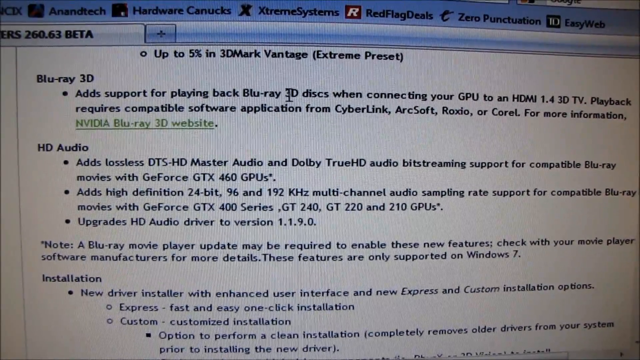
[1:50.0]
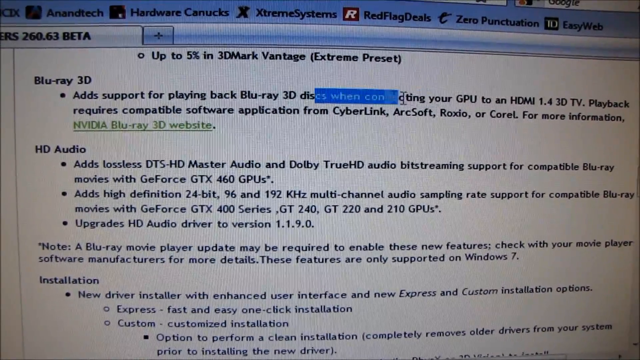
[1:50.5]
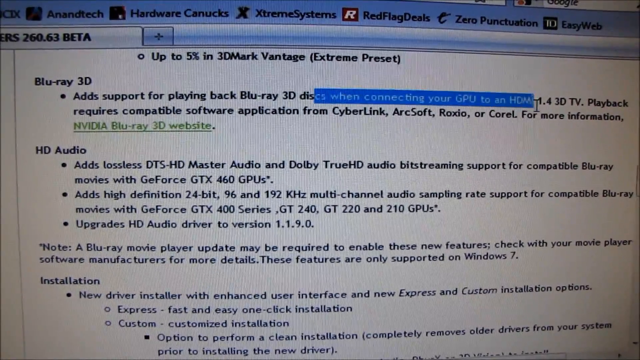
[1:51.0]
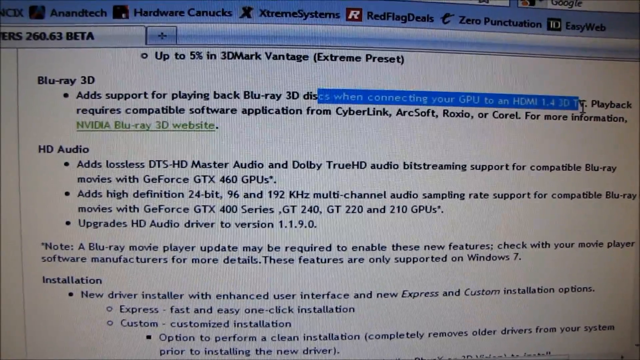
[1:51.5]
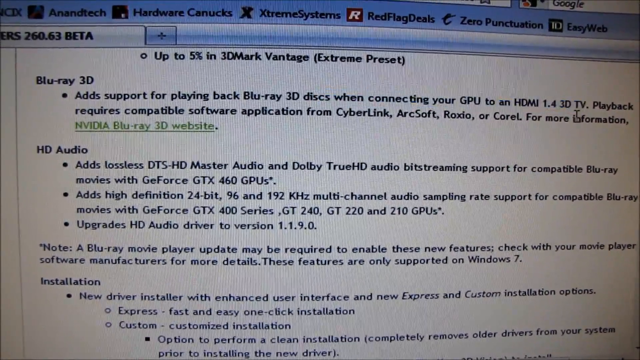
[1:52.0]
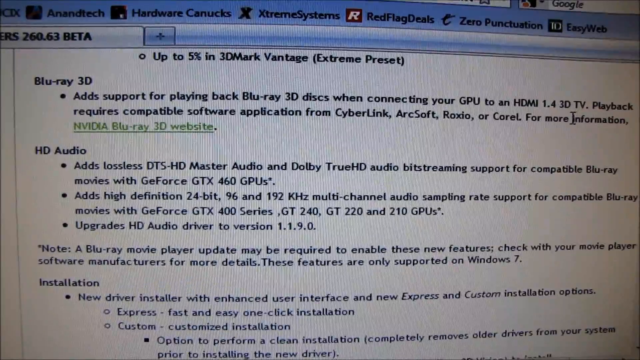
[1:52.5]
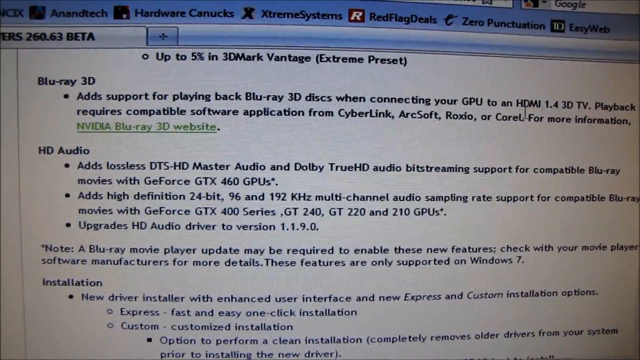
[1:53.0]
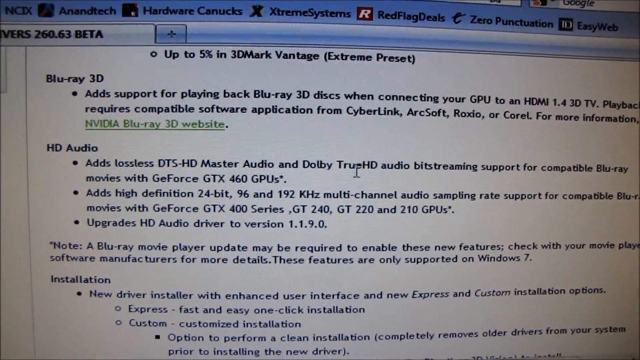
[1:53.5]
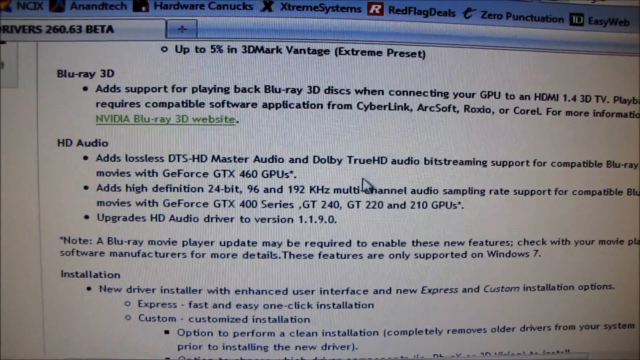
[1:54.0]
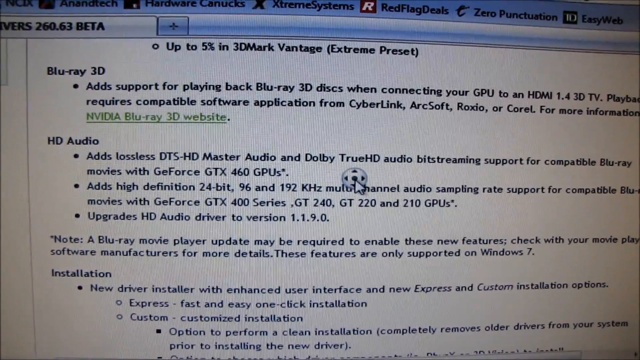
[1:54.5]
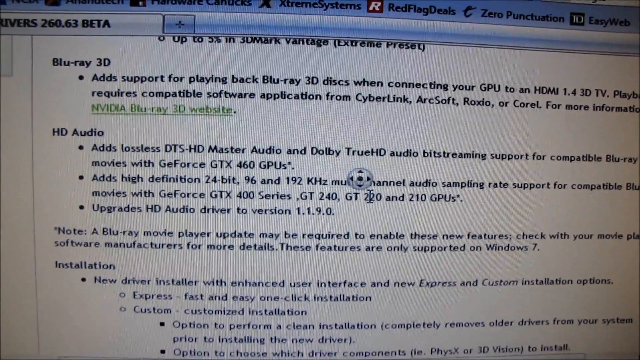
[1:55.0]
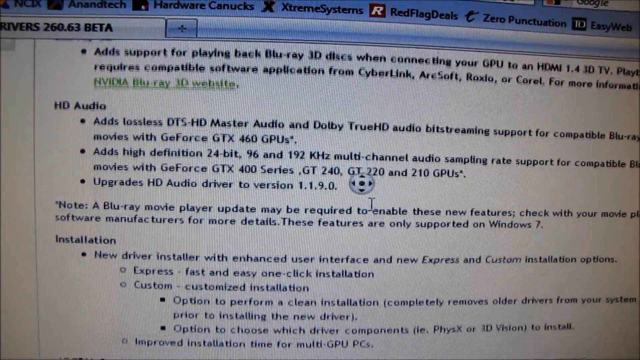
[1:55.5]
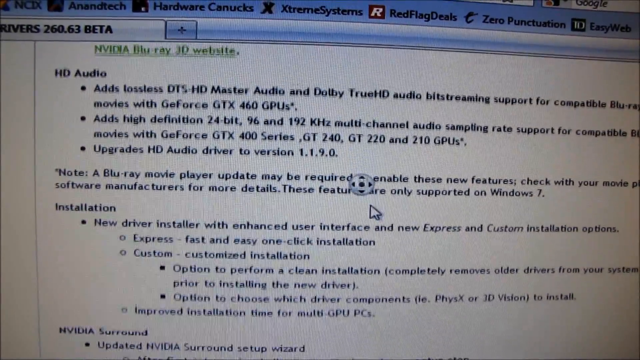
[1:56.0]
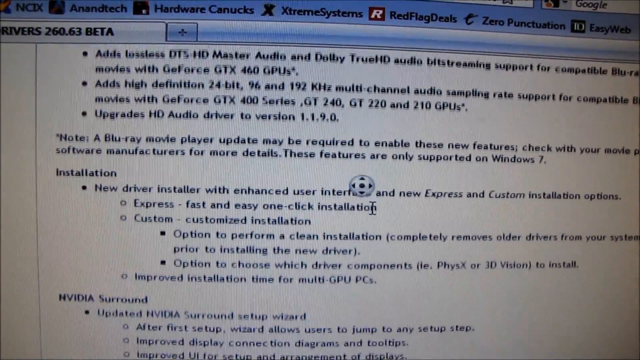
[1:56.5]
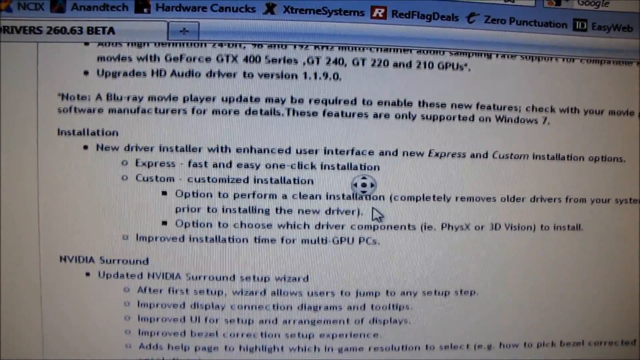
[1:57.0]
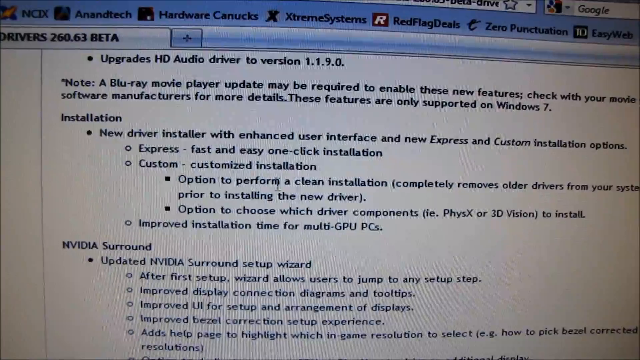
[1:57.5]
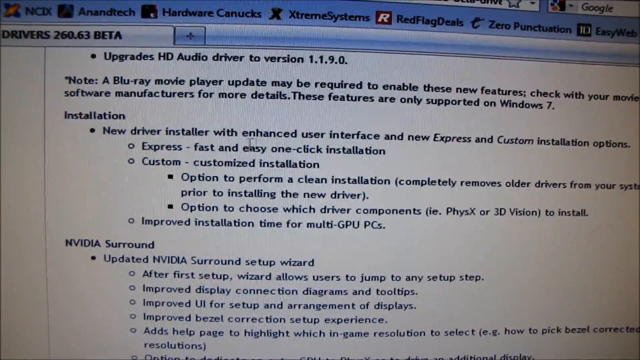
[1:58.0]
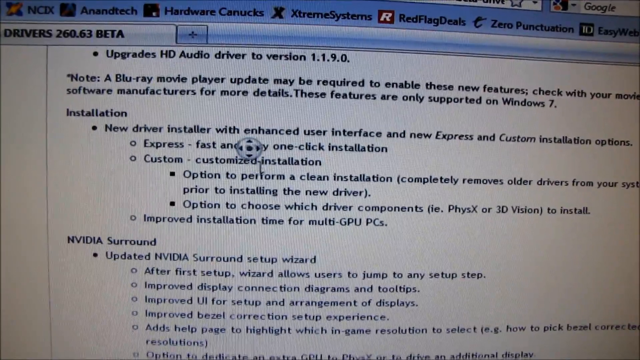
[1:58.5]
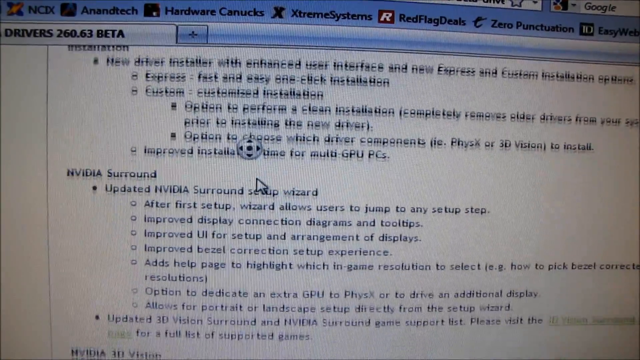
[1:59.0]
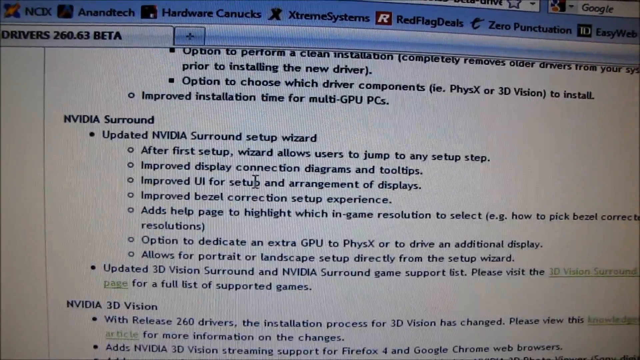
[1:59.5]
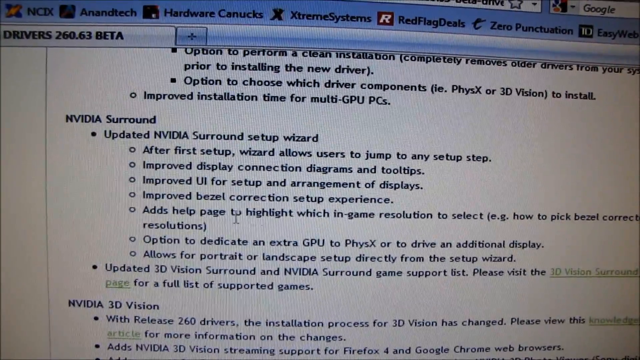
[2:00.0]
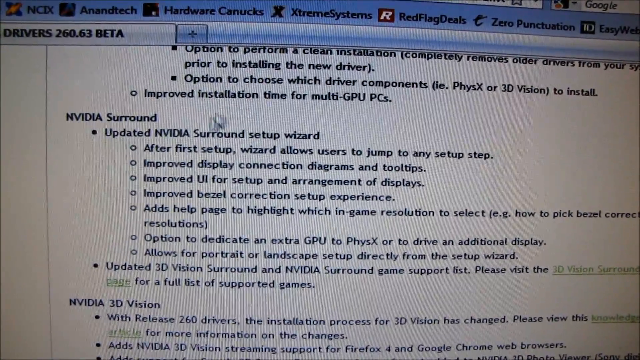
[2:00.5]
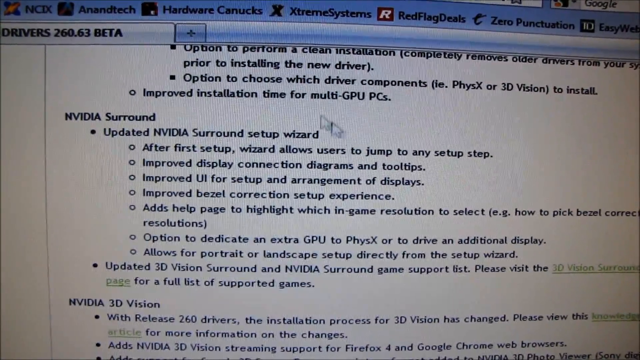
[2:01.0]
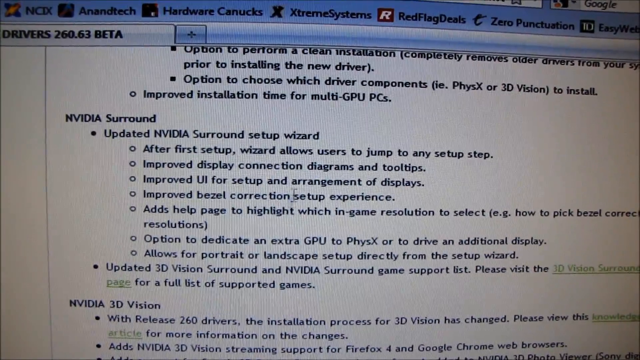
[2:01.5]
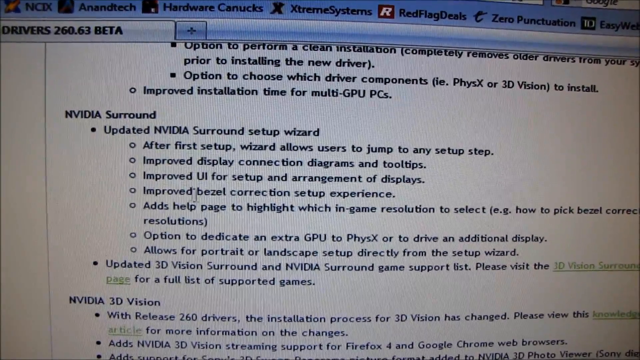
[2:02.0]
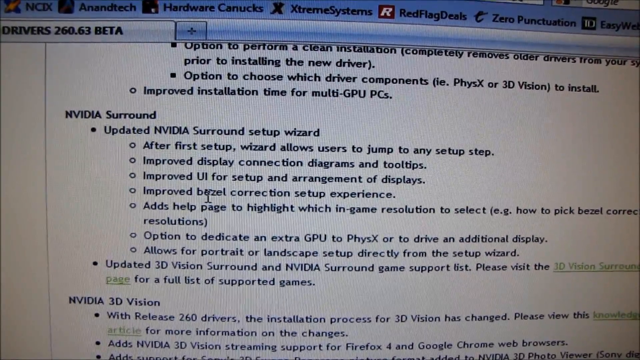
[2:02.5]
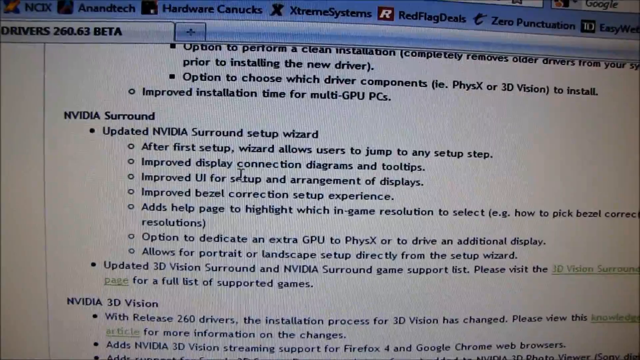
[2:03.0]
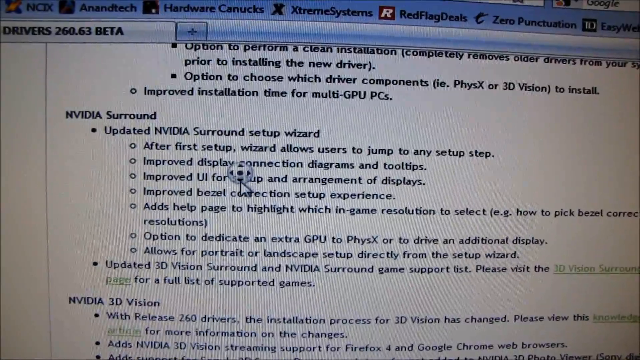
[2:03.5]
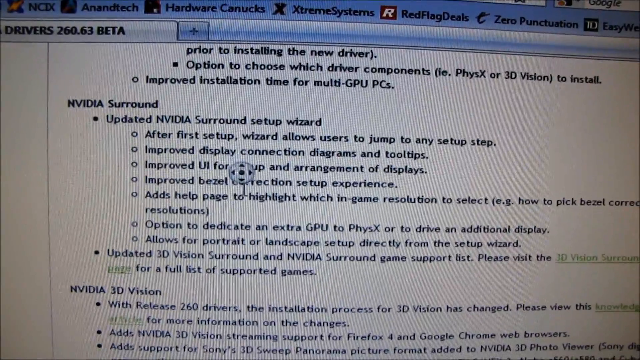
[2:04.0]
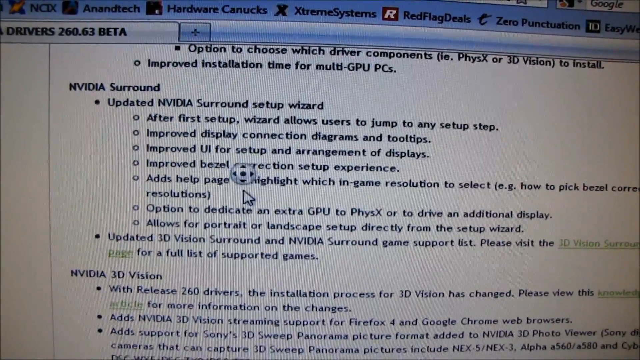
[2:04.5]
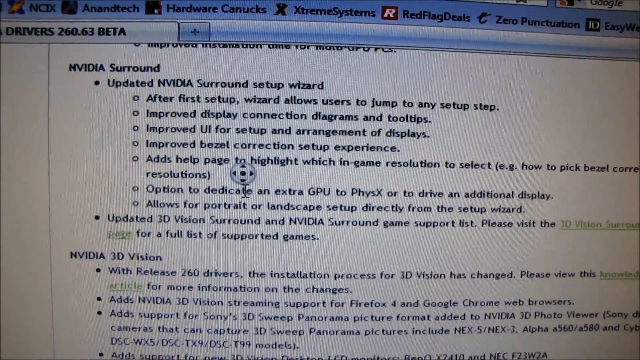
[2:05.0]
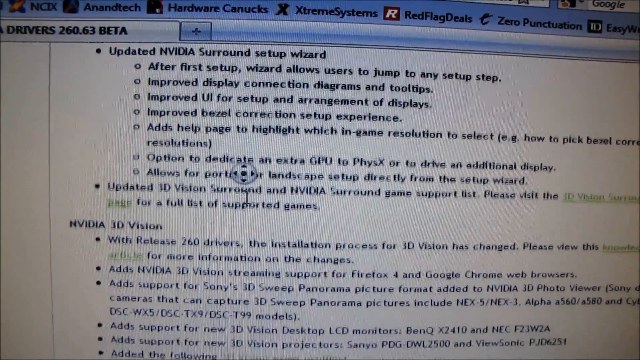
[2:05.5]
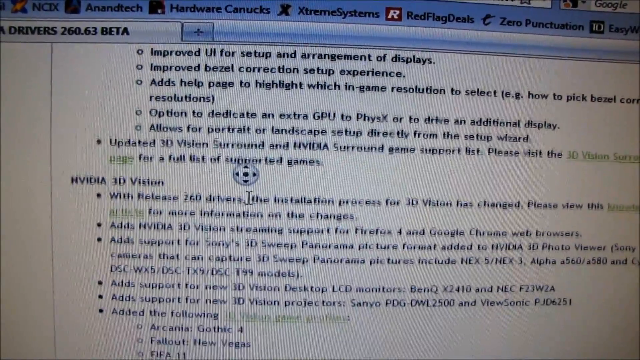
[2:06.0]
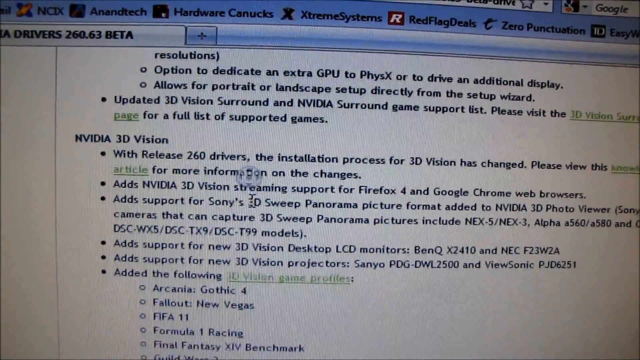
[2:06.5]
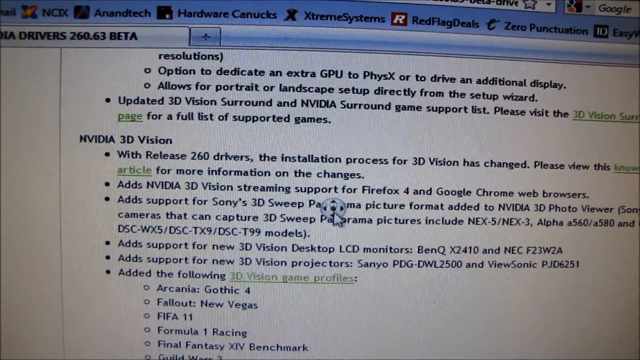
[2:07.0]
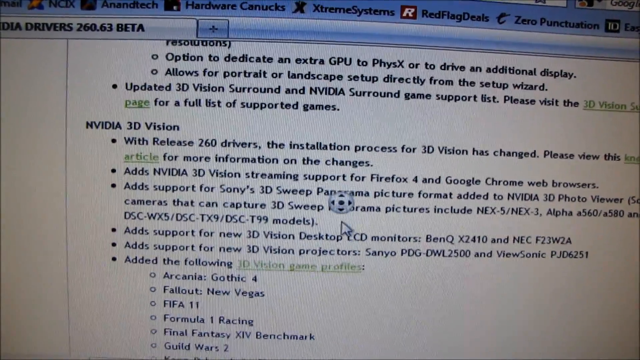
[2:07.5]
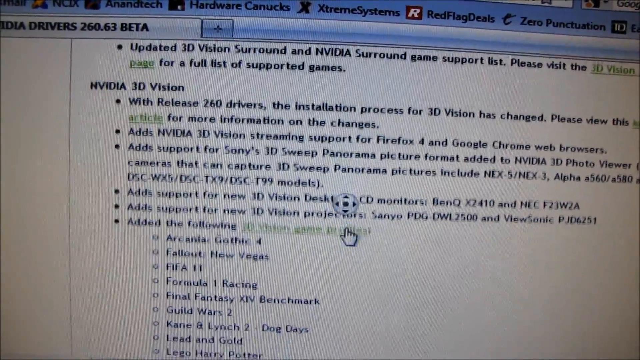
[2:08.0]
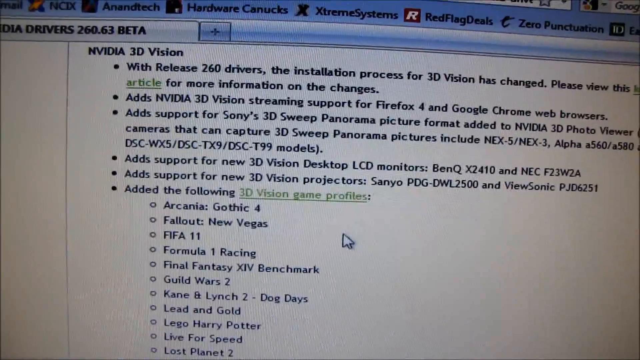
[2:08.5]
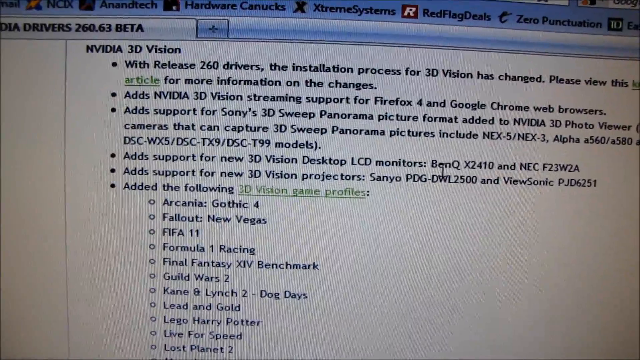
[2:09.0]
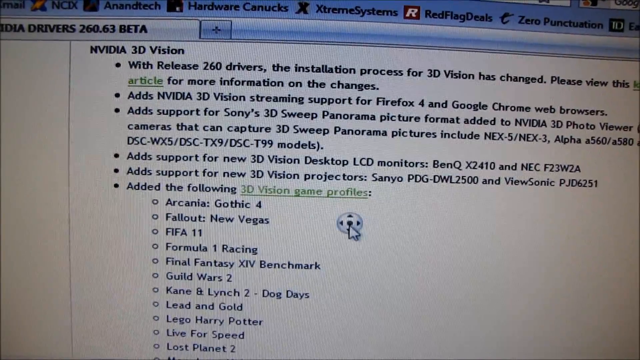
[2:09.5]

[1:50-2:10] The user moves the cursor up above the HD audio section into a section titled "Blu-ray 3D" and highlights text that says "3D discs when connecting to your GPU to an HDMI". He then scrolls down using a middle-mouse-button scroll, with the four-direction scrolling icon in the center of the screen. He stops at a section called "Installation", moves the cursor around, and quickly moves on. He stops again at a section titled "NVIDIA Surround", circles the cursor around it a few times, and continues down, stopping briefly at a section about NVIDIA 3D Vision.